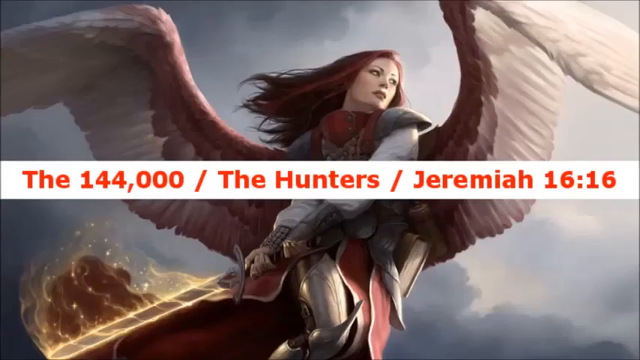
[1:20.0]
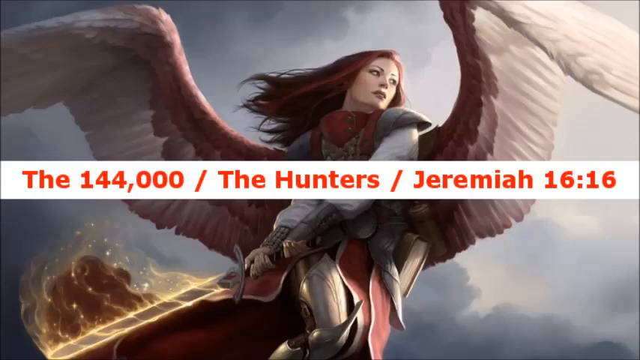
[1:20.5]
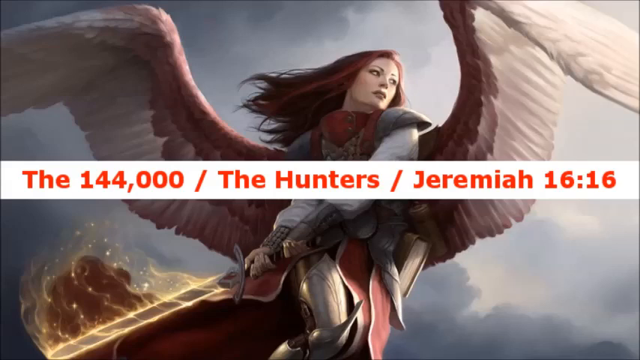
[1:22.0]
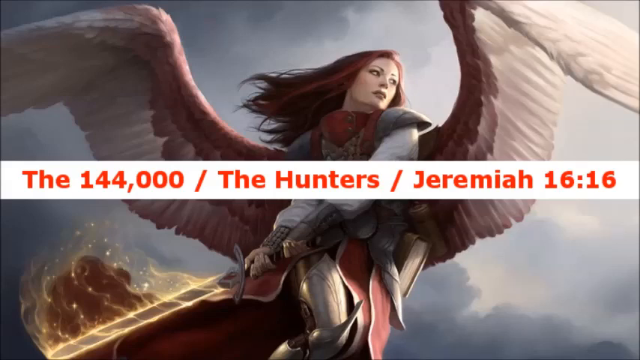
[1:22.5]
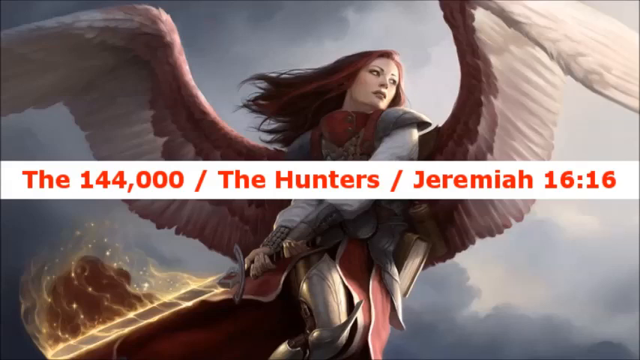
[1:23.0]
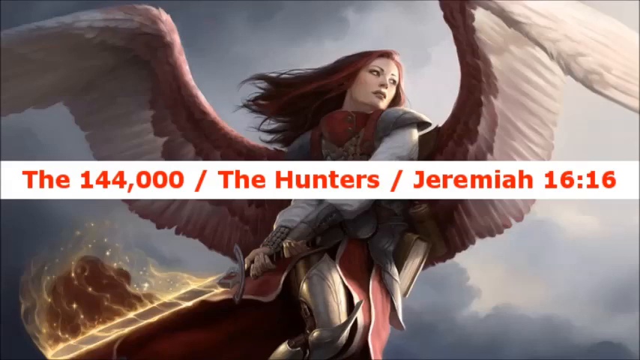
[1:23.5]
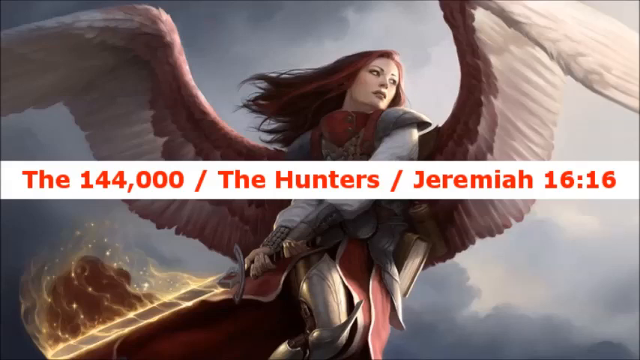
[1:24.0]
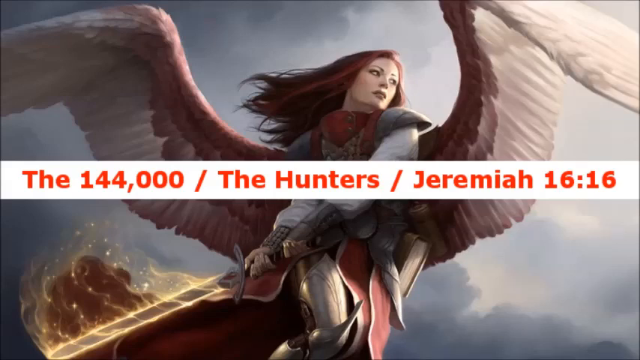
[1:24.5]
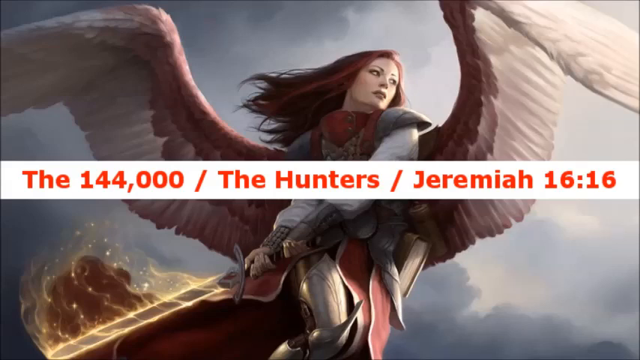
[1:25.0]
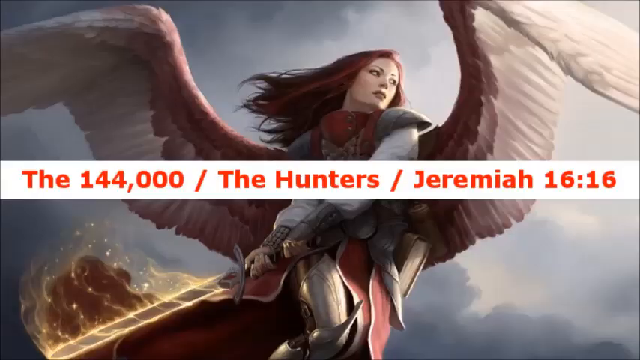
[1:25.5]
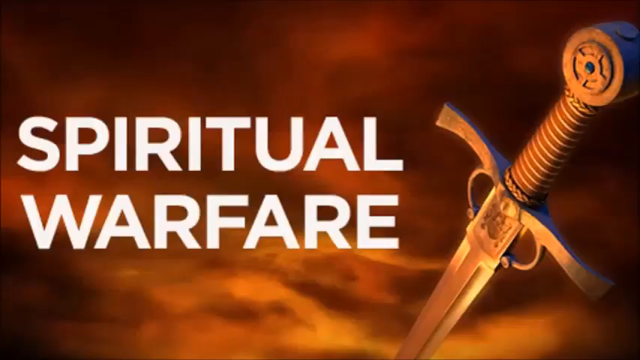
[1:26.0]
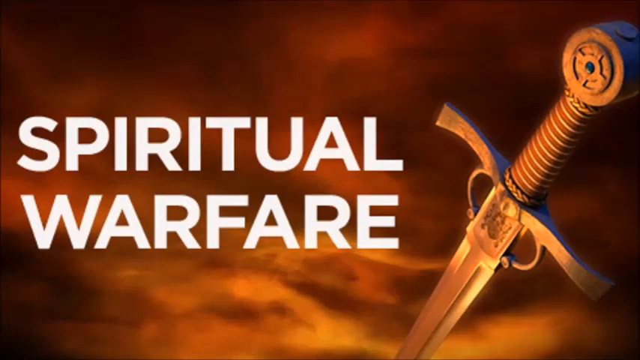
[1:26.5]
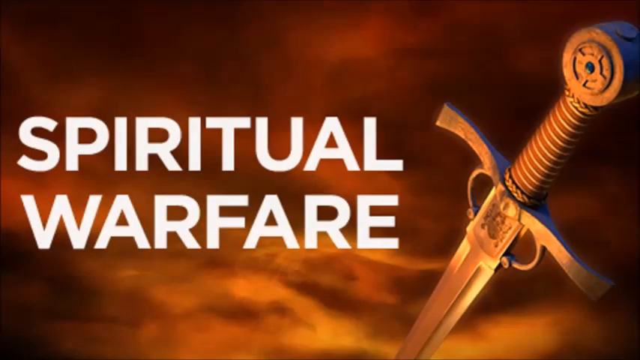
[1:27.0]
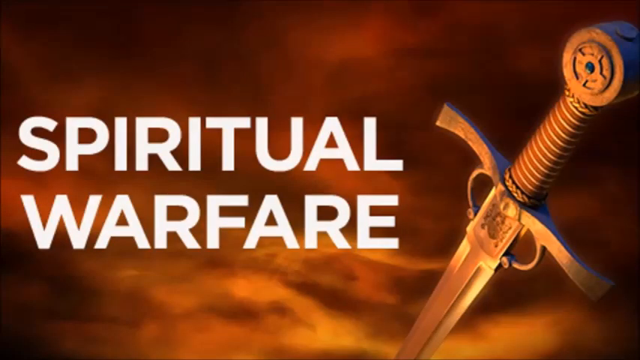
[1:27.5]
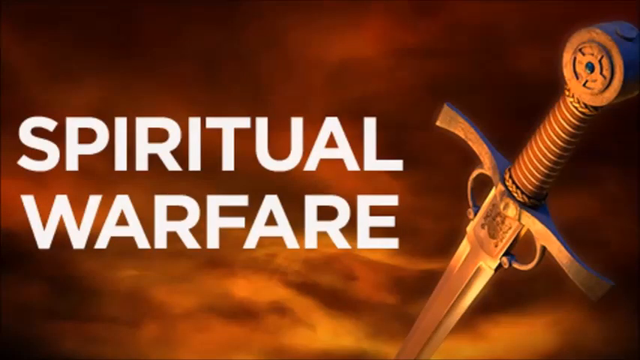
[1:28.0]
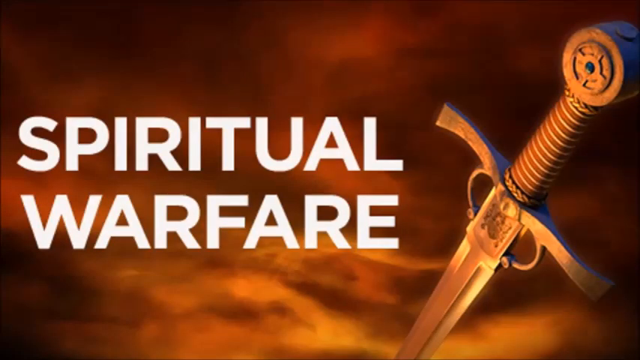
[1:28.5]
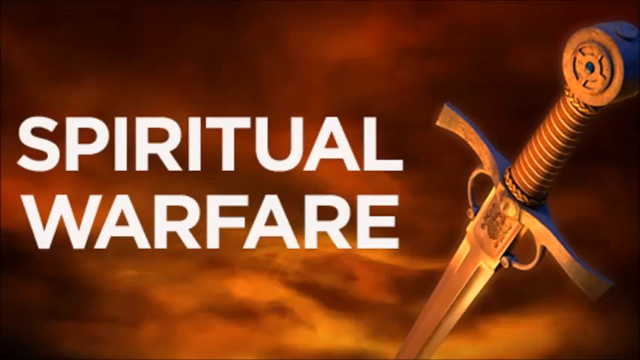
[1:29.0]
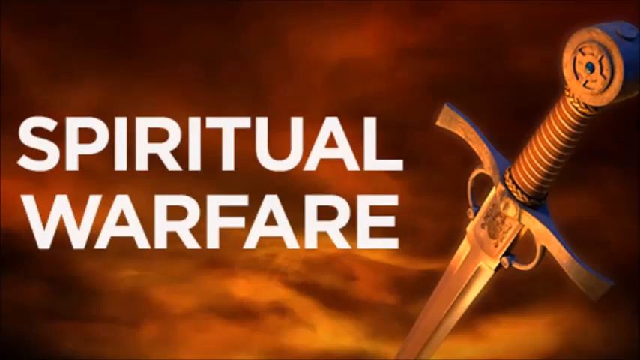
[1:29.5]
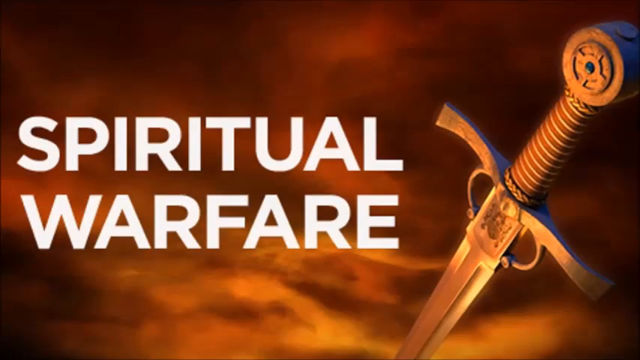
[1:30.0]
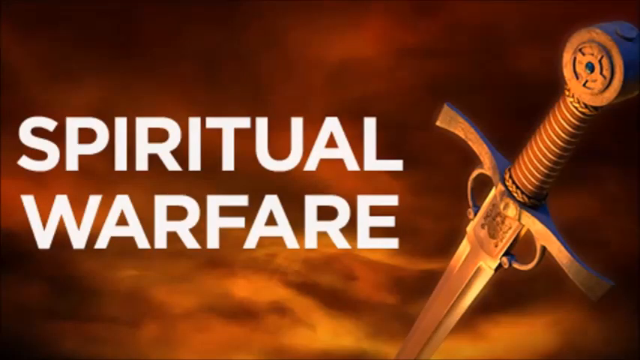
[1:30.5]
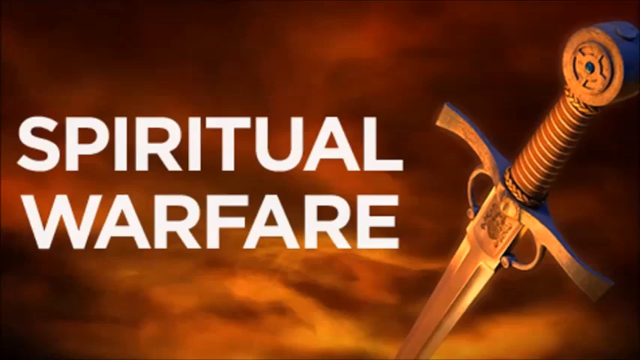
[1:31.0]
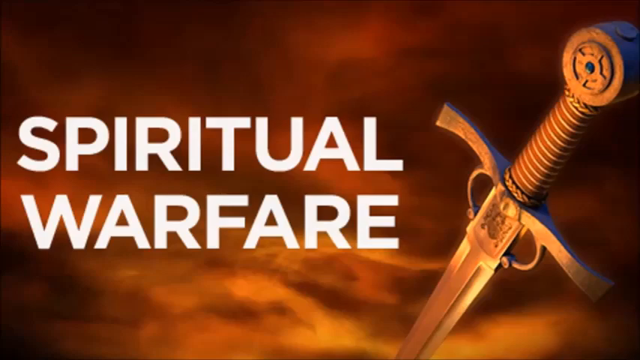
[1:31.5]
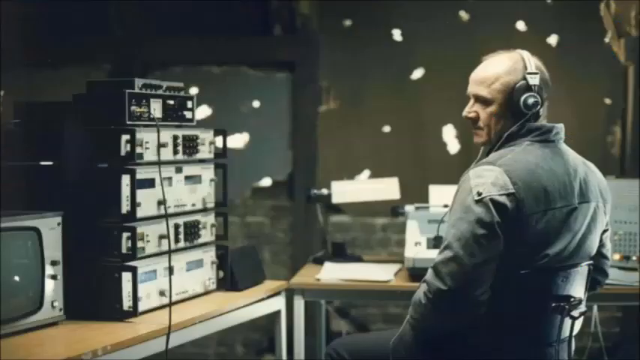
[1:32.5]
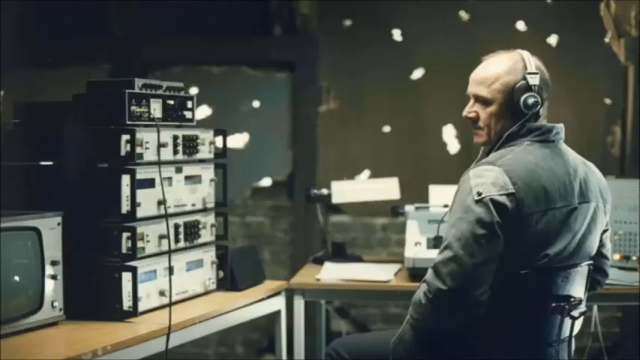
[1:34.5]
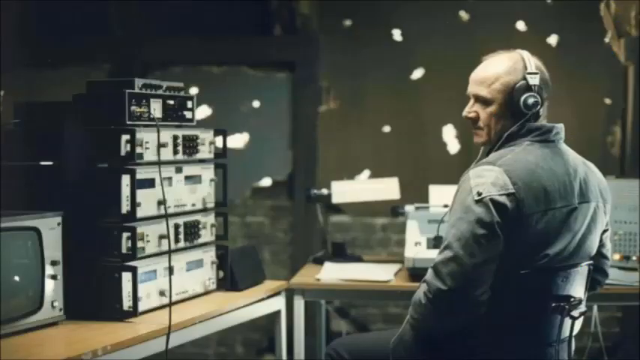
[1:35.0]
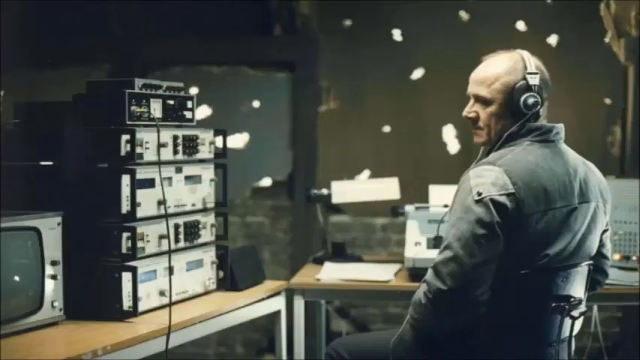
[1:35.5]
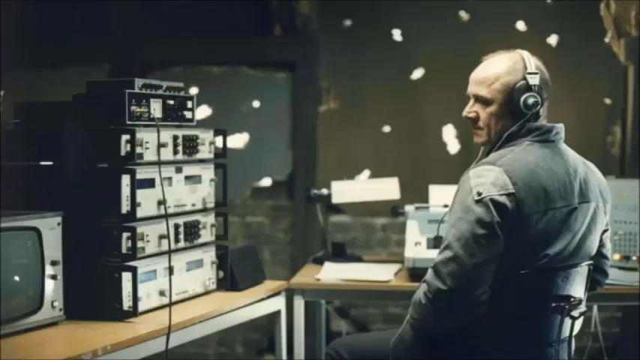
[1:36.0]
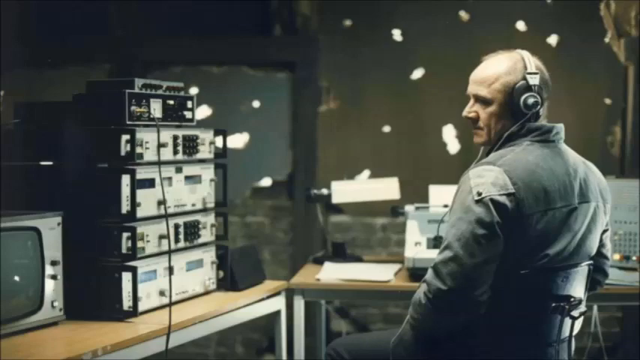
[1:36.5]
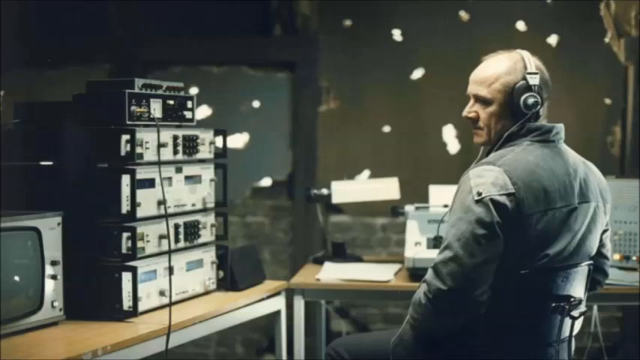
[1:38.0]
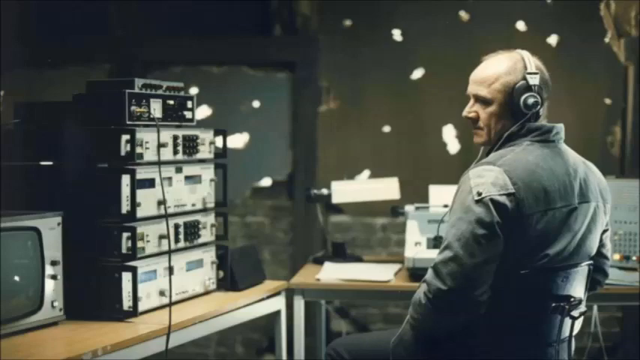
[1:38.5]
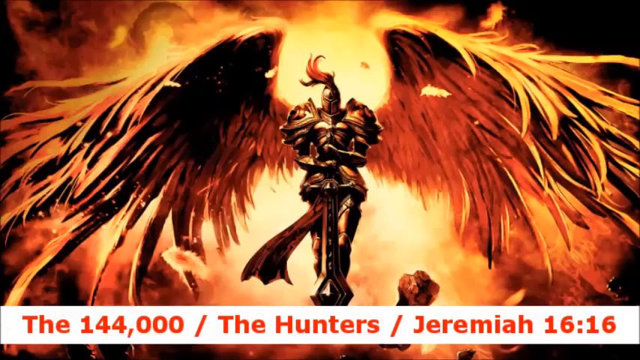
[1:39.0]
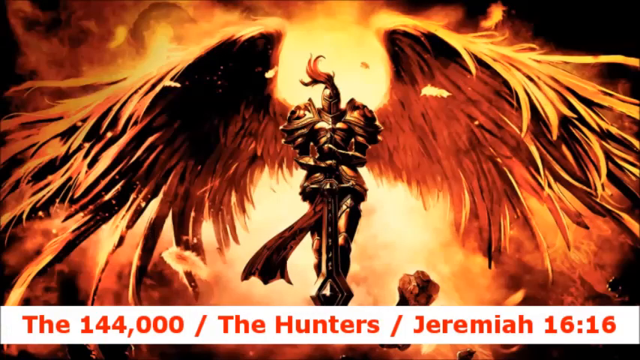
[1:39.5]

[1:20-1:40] An illustration shows a person with a pair of white and red wings; in the center of the image is a white banner containing red text. The next image contains a sword on the right side and two lines of white text on the left side. Another image shows a man wearing very large headphones and looking to the left. In front of him are two tables whose lower part is light colored, and whose surface seems to be made of wood. On one of the tables there are electronic devices, including a monitor on the lower left and a series of light-colored metal boxes stacked on top of each other at the right end of one of the two tables. In the background is a dark wall, and there are very light white spots within the image.